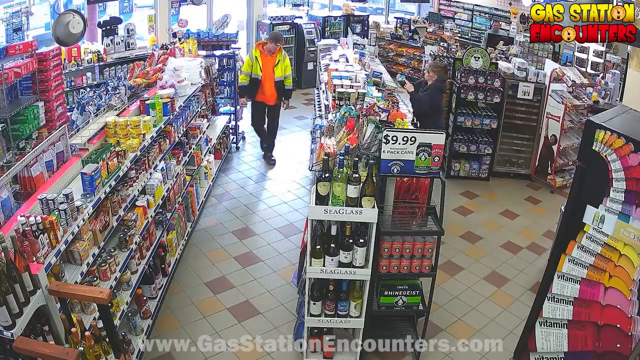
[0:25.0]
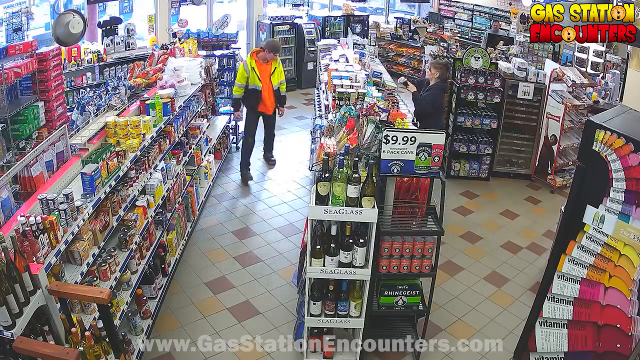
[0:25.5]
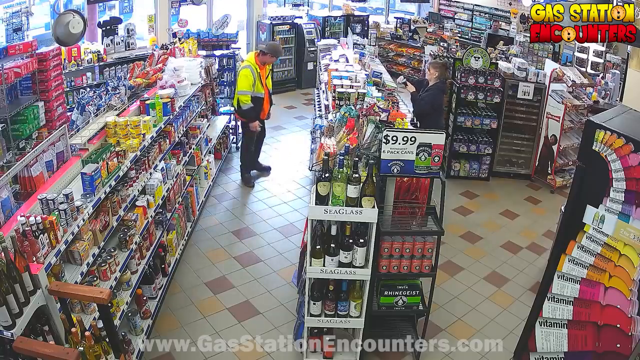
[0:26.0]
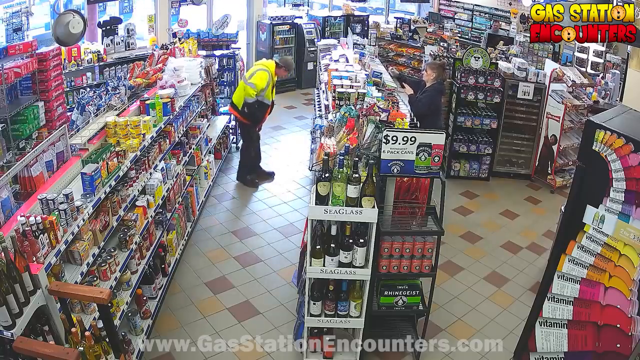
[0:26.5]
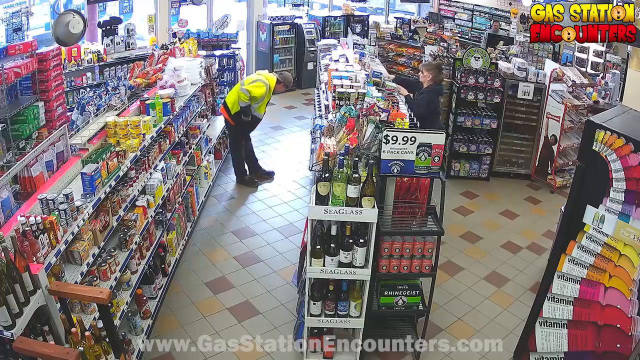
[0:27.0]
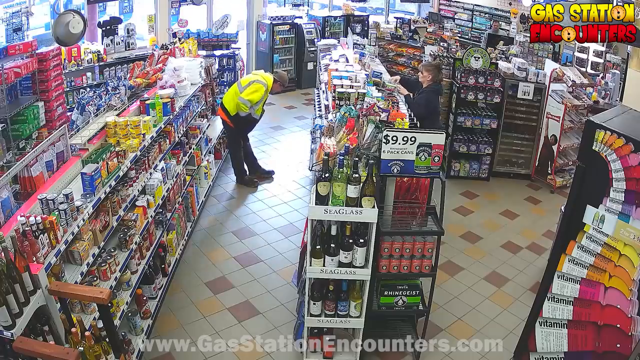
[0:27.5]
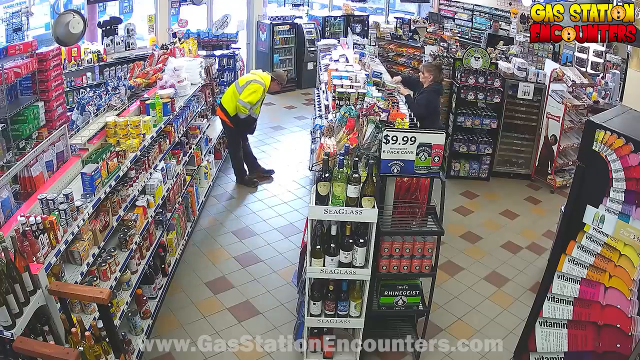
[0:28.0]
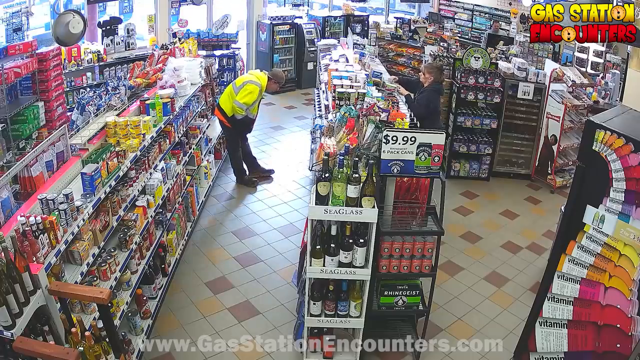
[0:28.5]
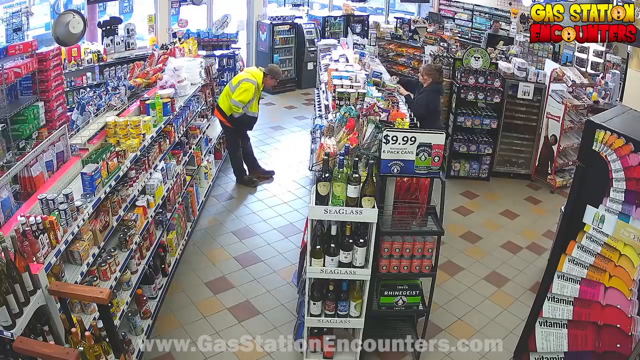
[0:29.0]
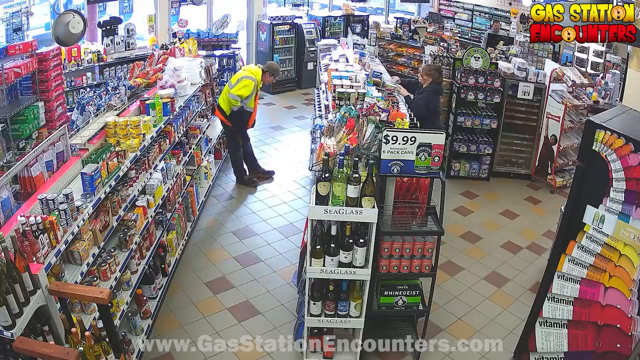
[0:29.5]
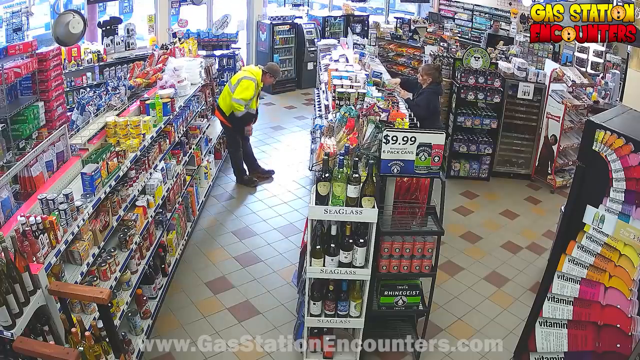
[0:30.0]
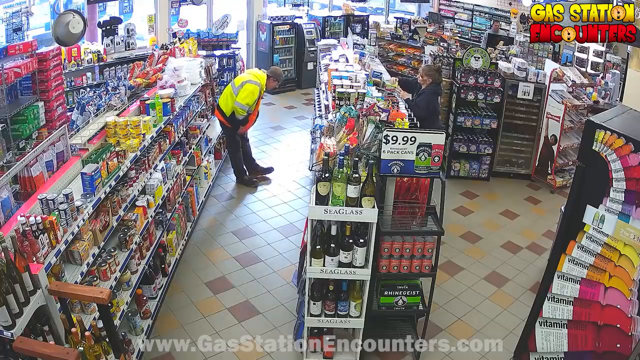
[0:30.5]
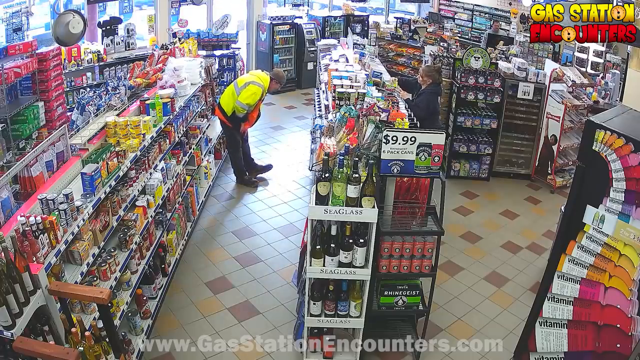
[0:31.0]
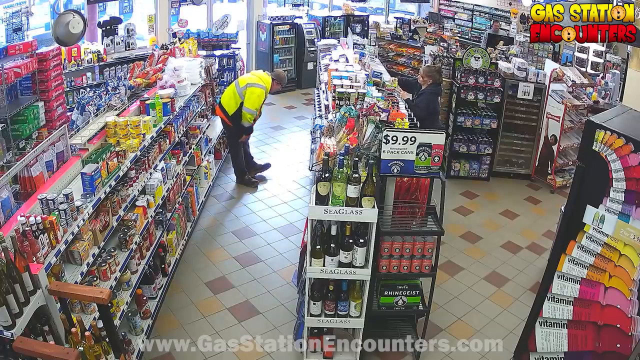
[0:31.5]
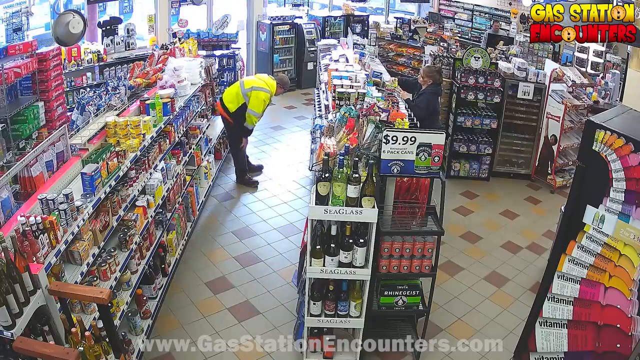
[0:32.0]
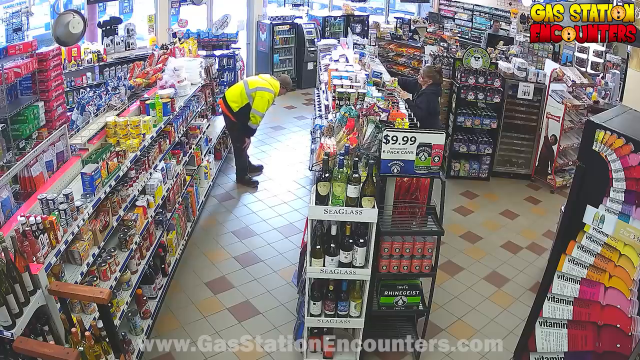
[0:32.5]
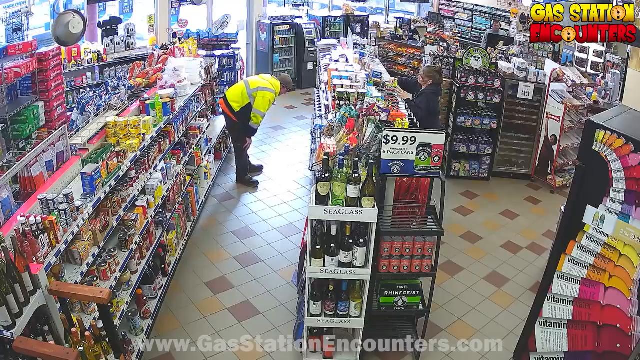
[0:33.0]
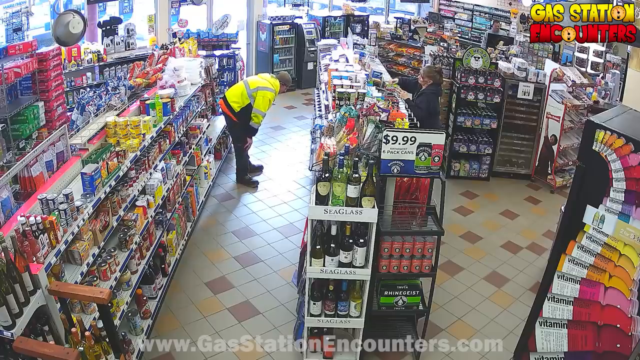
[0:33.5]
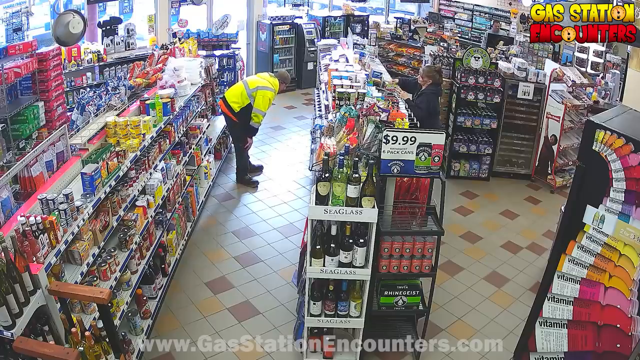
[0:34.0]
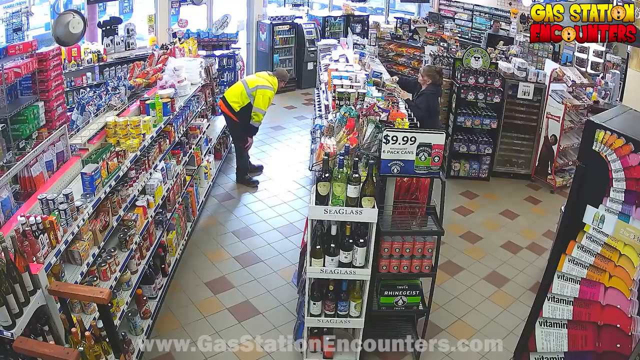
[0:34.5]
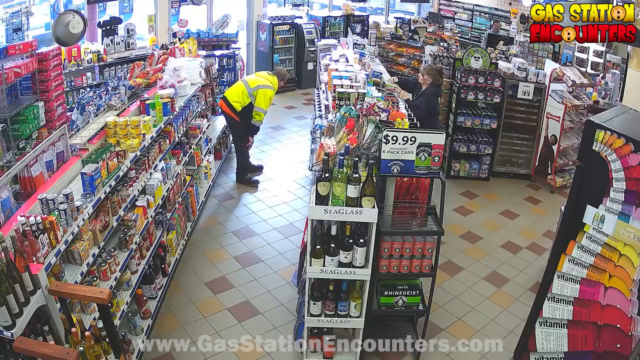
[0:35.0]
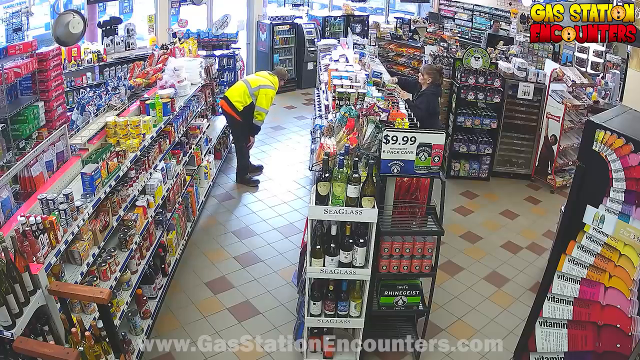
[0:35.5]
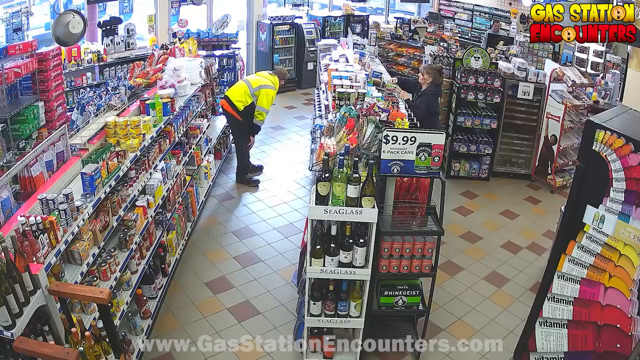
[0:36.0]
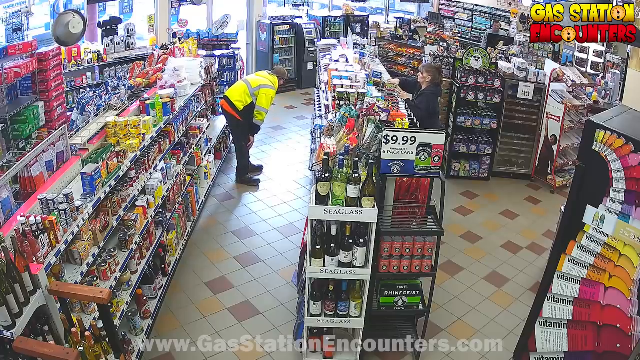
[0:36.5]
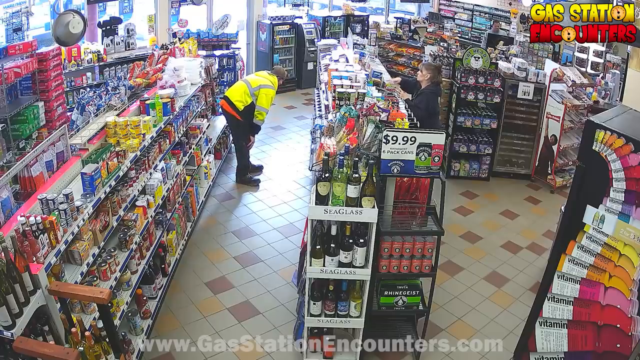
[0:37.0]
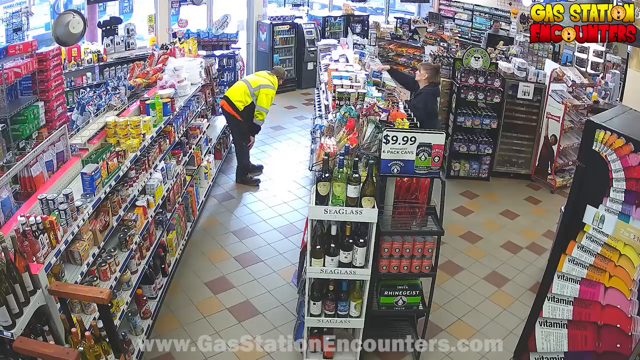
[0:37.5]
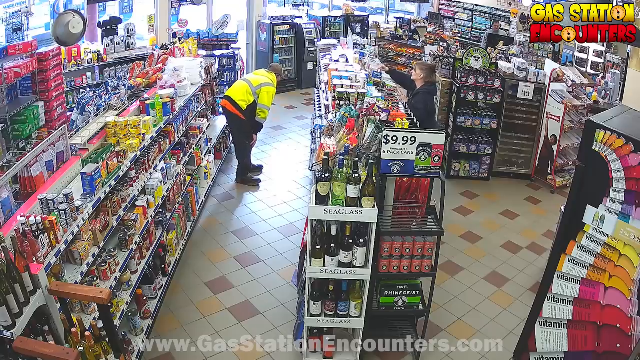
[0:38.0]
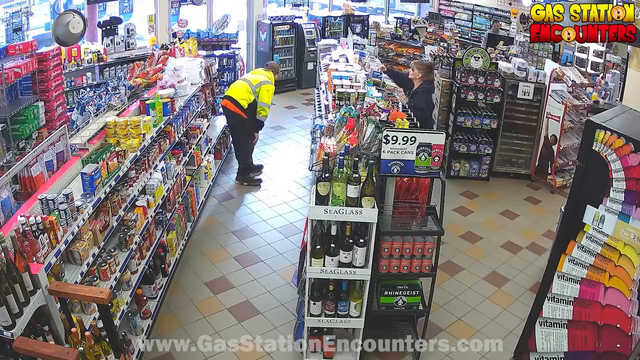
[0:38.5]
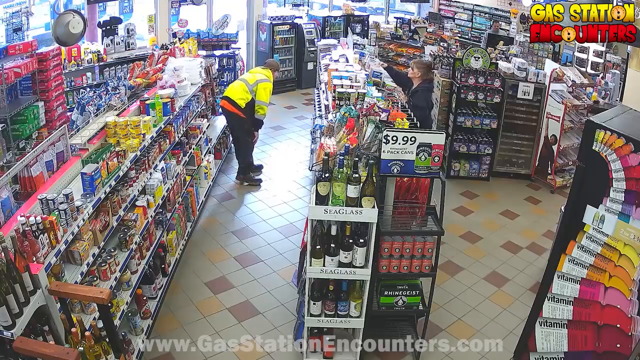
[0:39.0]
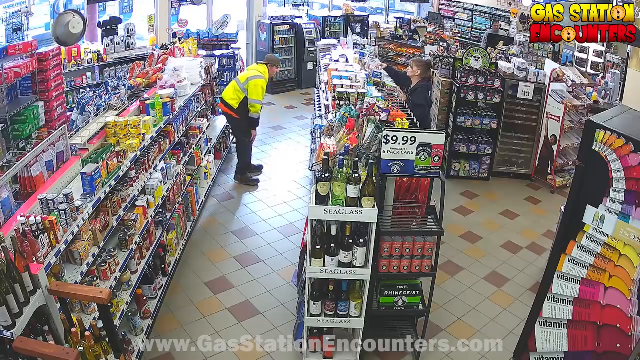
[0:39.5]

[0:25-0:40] On the left, the man in the yellow vested jacket is bent over, browsing items on a shelf. On the right, a woman in a black sweatshirt browses a couple of items on the top of that shelving unit. In the bottom right corner there is a display of various vitamin water bottle designs placed next to each other in a curved line. In the background are various rack stands with different items. In the top right corner, "gas station" appears in yellow text and "encounters" in red text. The man in the yellow vested jacket on the left moves slowly, browsing various items on the middle shelf of the shelving unit.